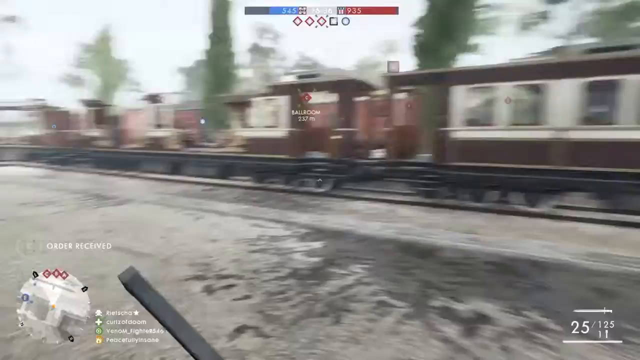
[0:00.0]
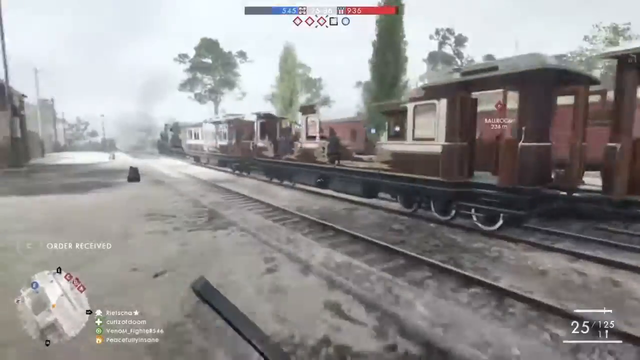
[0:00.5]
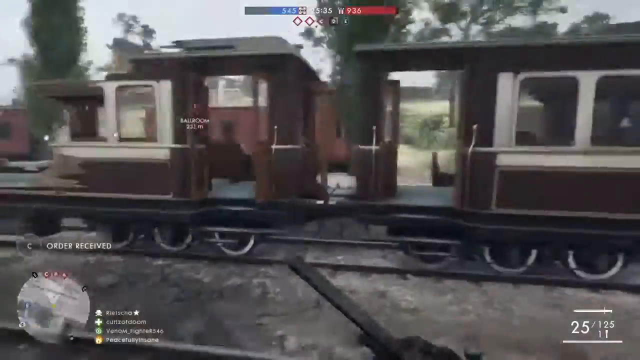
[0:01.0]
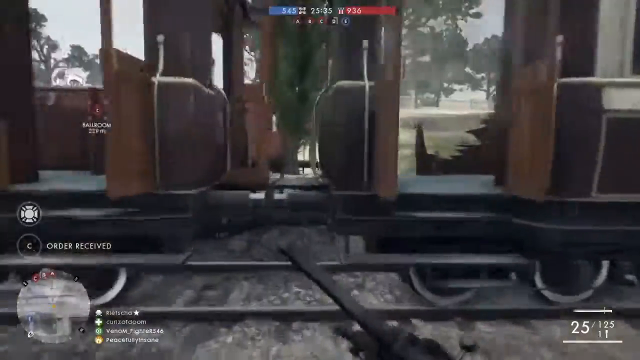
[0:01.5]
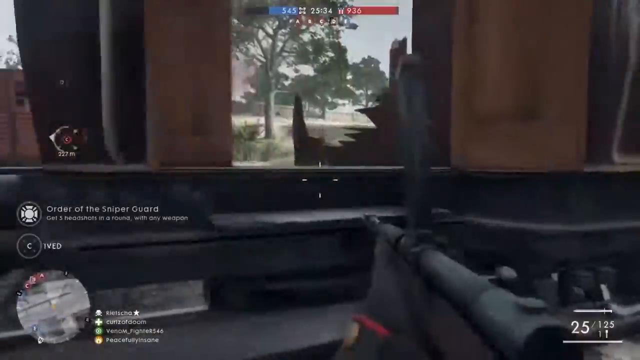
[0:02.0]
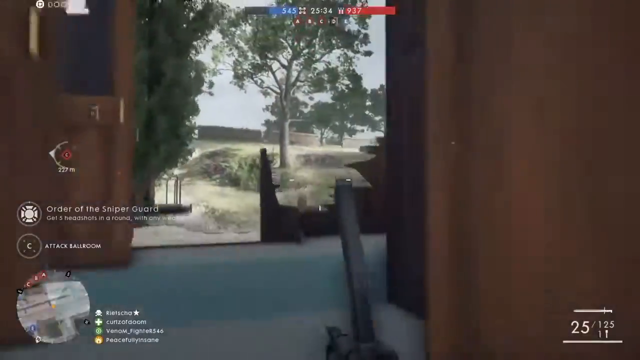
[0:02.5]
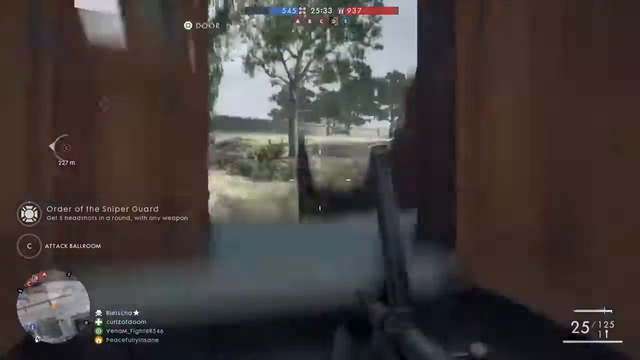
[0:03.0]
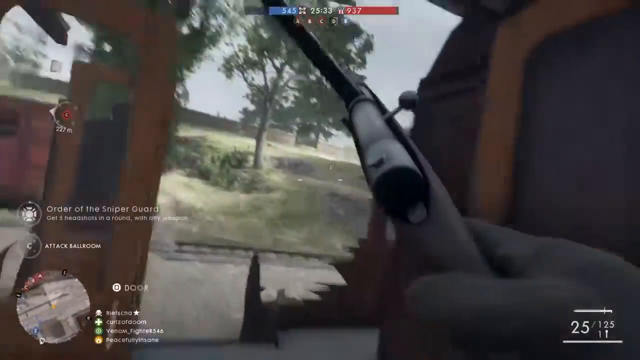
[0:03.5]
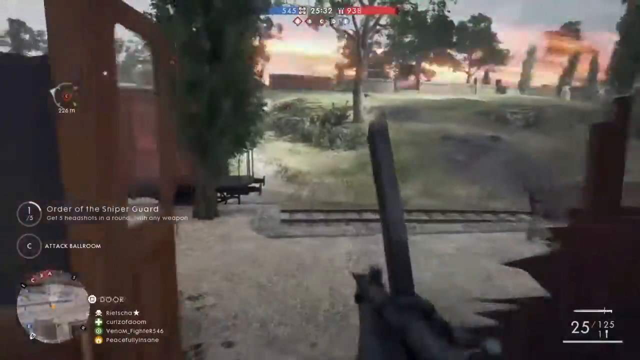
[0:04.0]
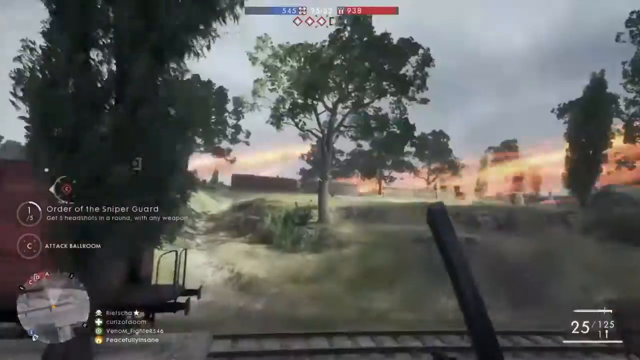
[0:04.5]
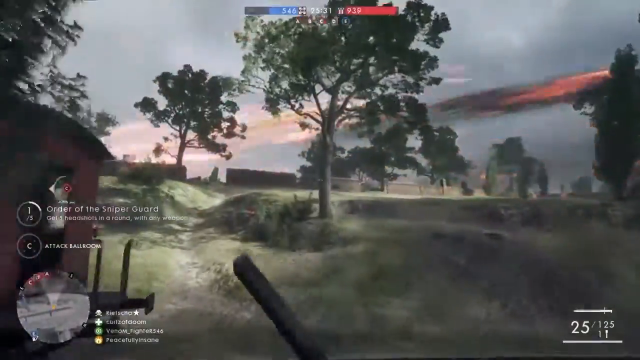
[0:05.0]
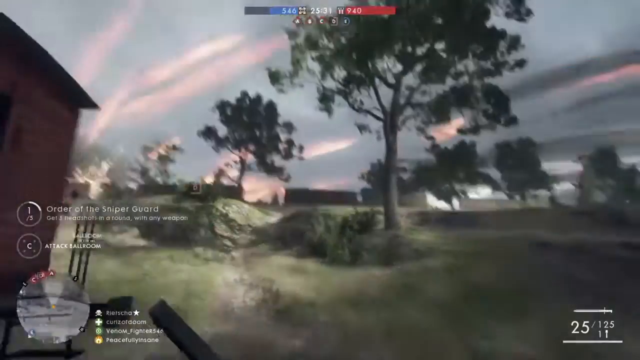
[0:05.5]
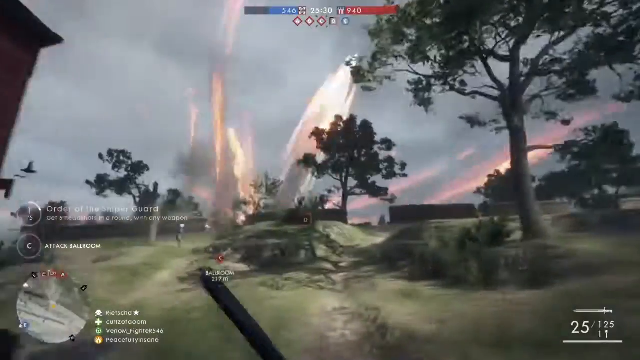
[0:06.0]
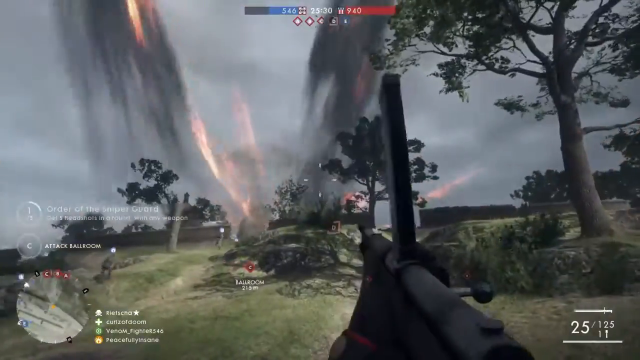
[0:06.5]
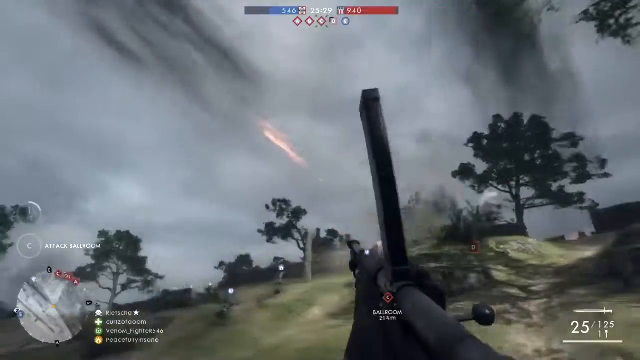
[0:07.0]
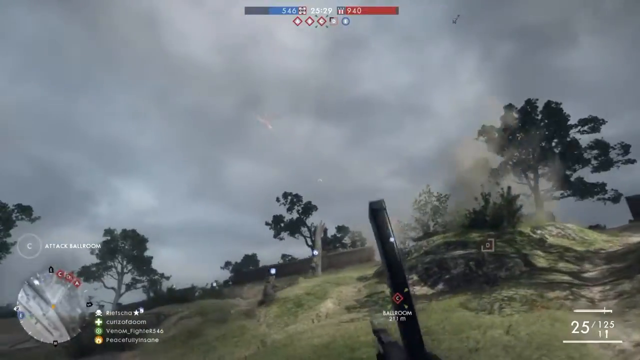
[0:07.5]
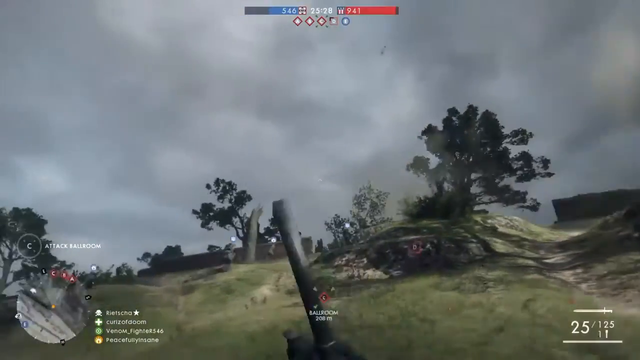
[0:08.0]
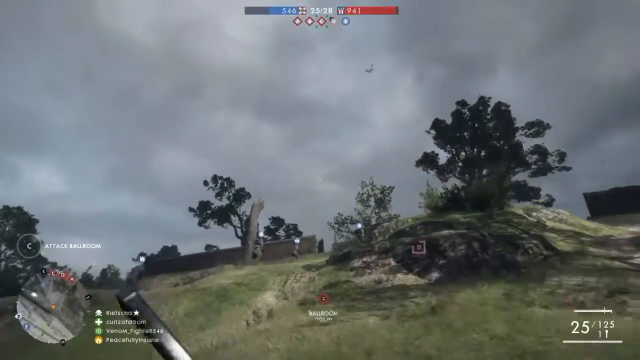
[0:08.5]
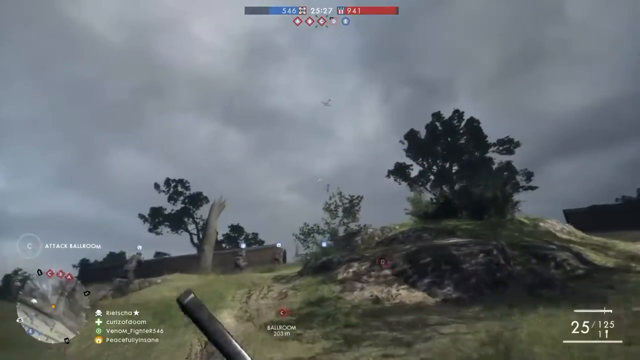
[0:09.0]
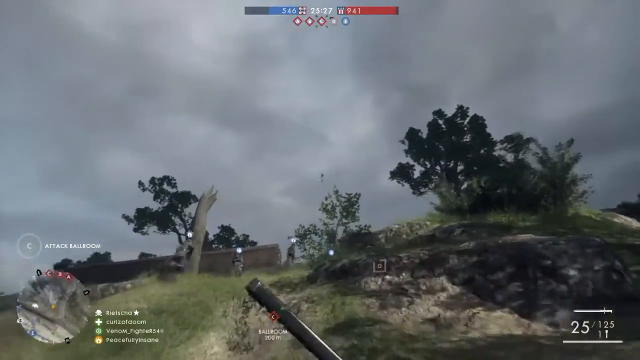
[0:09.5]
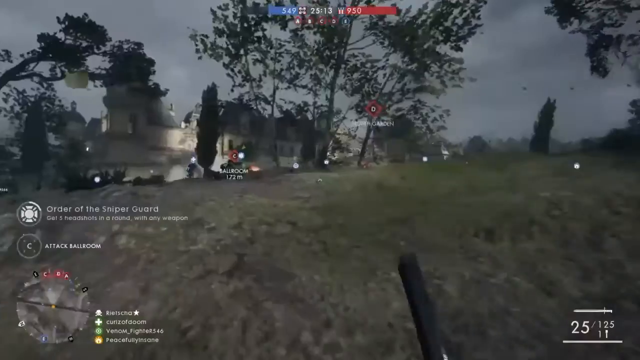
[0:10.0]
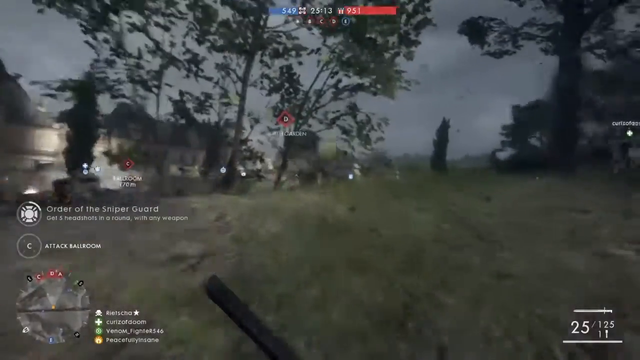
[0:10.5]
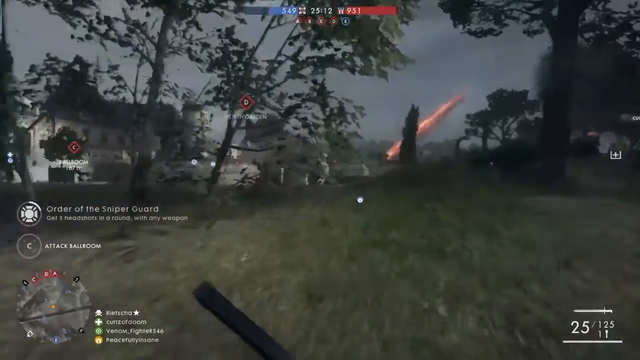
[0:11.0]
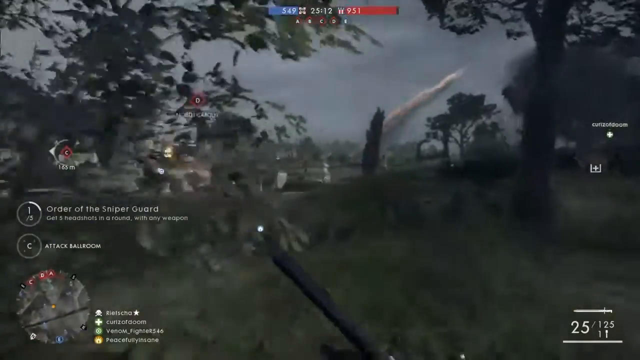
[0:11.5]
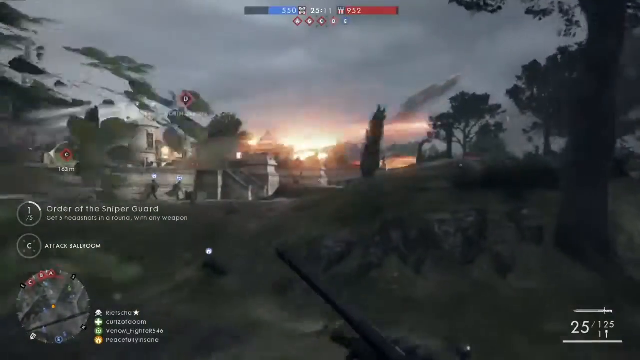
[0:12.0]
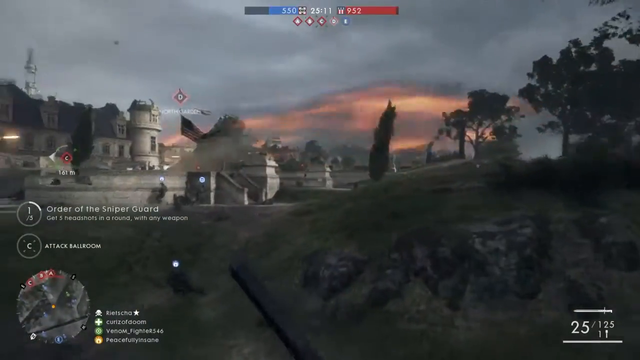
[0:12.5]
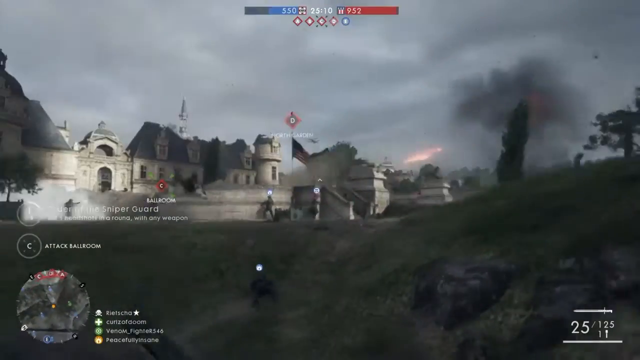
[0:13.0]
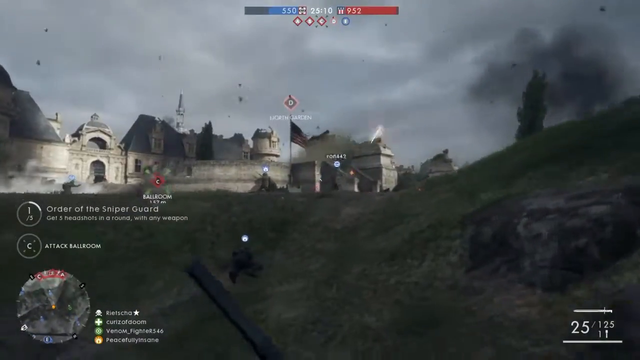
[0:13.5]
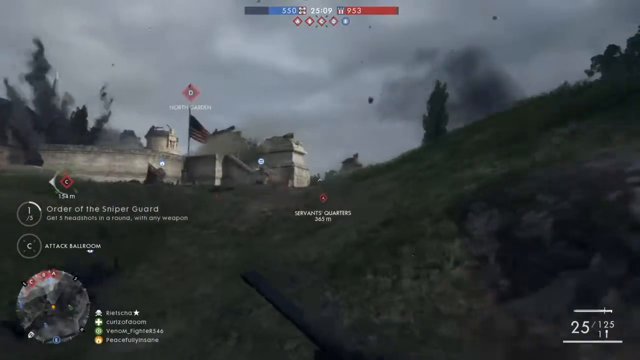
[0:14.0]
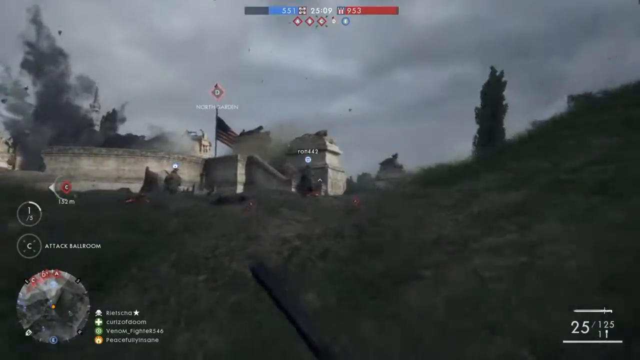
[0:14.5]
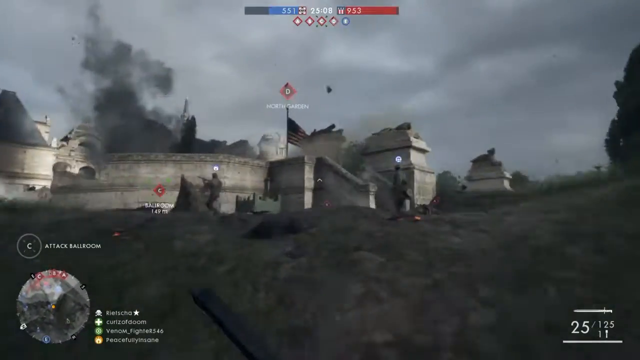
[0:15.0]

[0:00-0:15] A screen recording of a video game shows a player who appears to be running through a war zone of sorts, possibly a train yard. In the first half, the player runs up a hill, and then an incredibly large explosion in the distance lets off fire in all directions; the player kind of looks around, seemingly trying to work out what is happening. In the second part, the player is outside a large building or castle of some kind and is sprinting, heading down and over a ridge while bullets fly past, and what looks like a very similar explosion happens. A user interface shows the letters A, B, C, D and E in red and blue, and there appear to be point markers for the game, possibly marking points the player's team has to hold and points the enemy team is holding. A mini-map in the bottom left of the screen moves as the player changes the direction they are facing and where they are running.